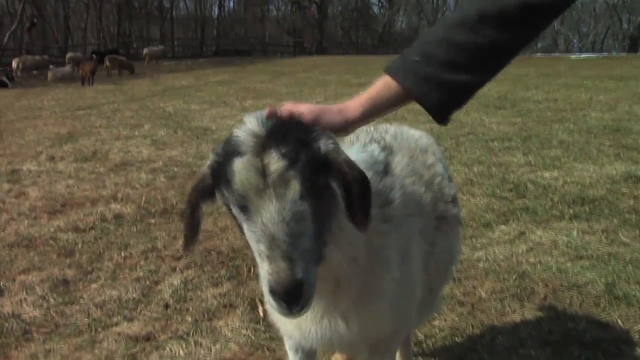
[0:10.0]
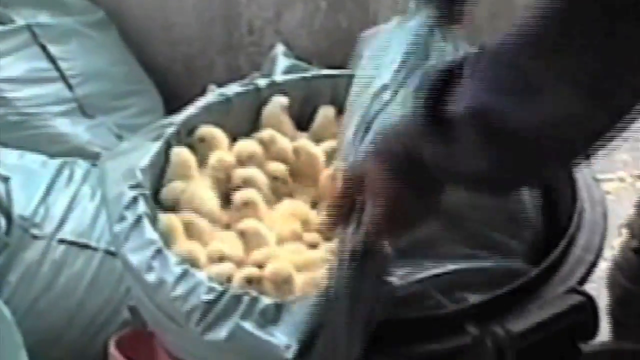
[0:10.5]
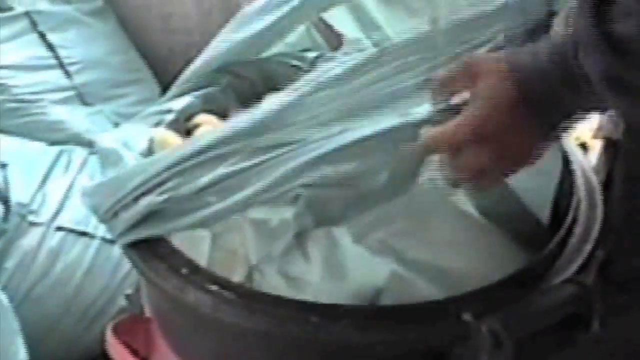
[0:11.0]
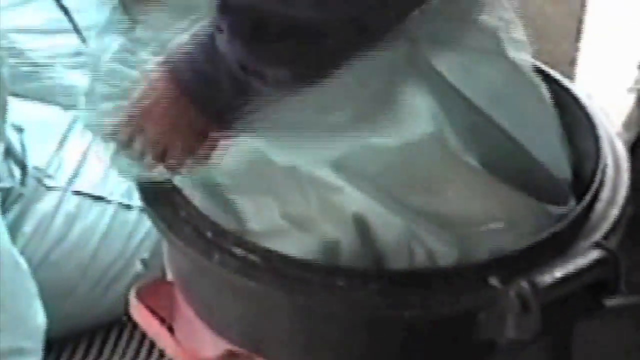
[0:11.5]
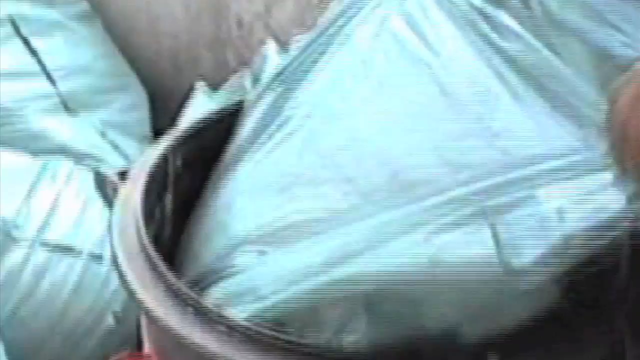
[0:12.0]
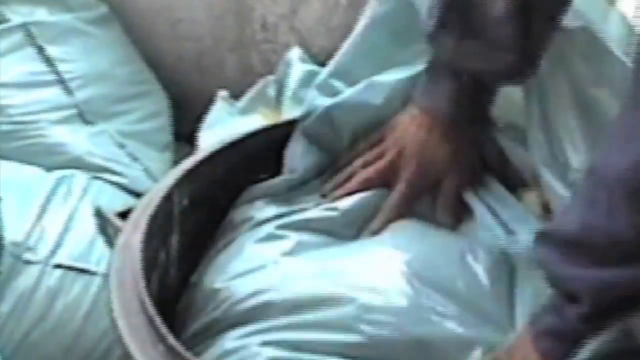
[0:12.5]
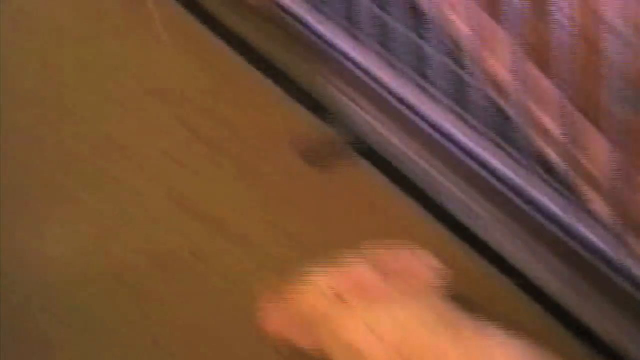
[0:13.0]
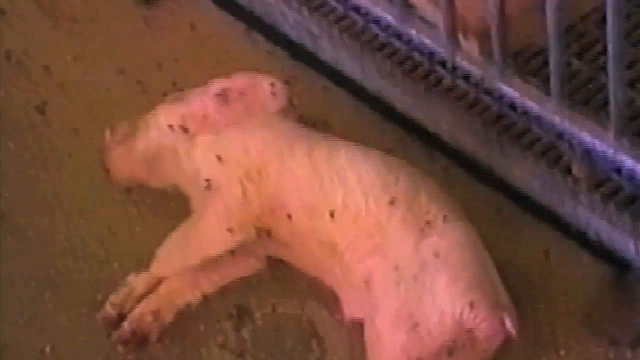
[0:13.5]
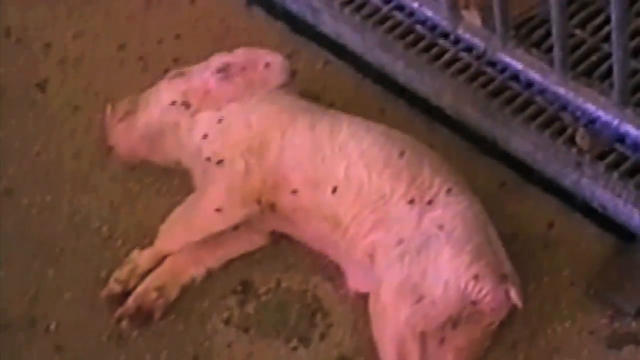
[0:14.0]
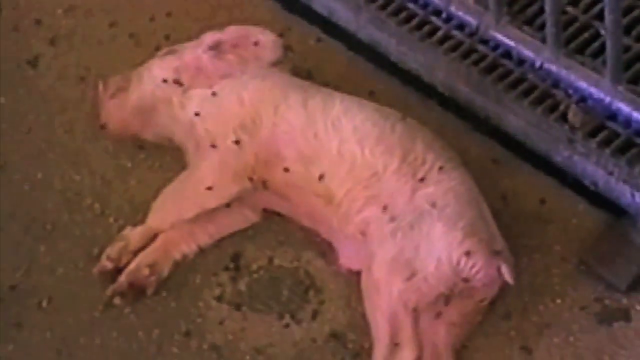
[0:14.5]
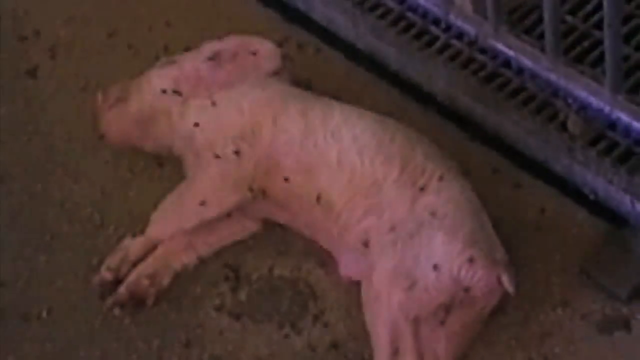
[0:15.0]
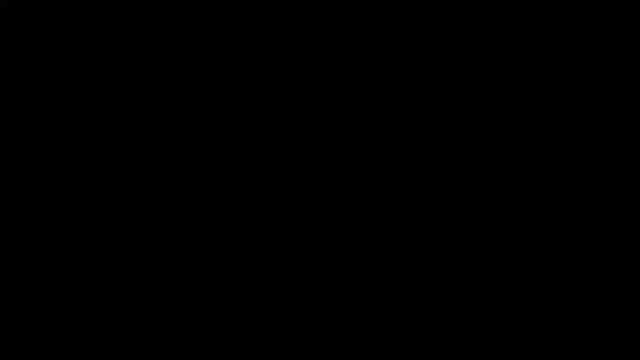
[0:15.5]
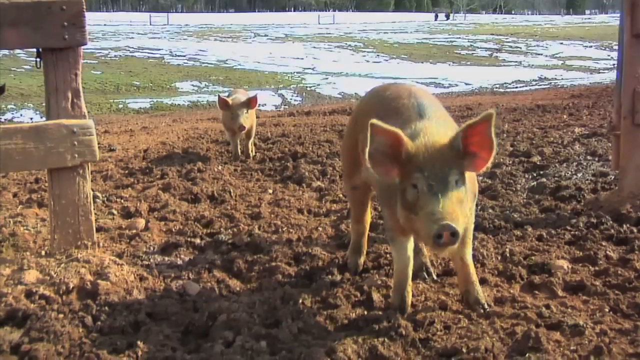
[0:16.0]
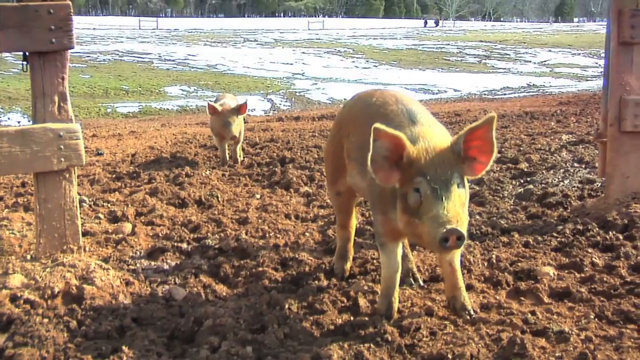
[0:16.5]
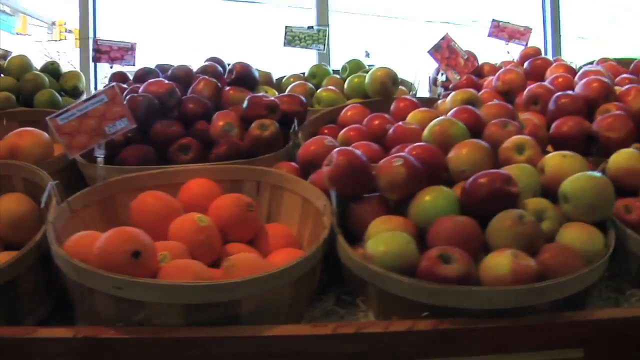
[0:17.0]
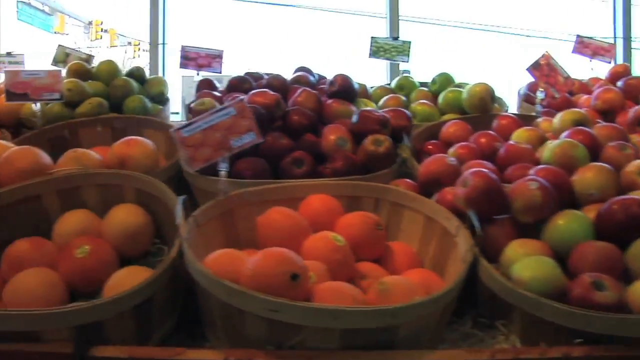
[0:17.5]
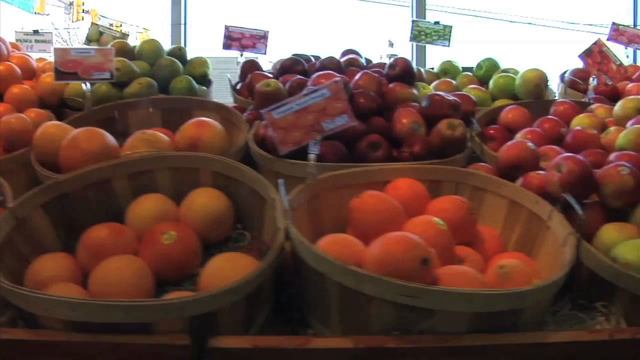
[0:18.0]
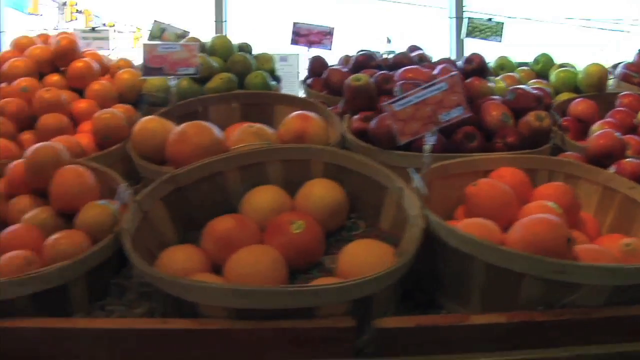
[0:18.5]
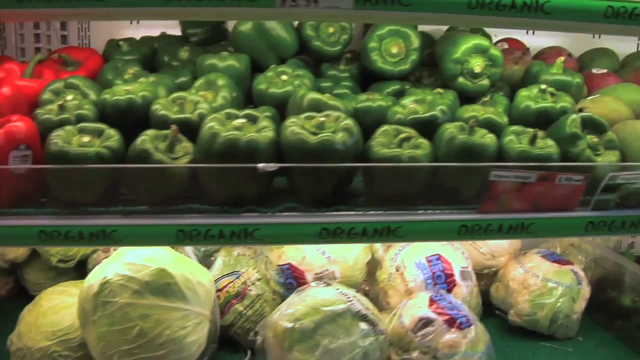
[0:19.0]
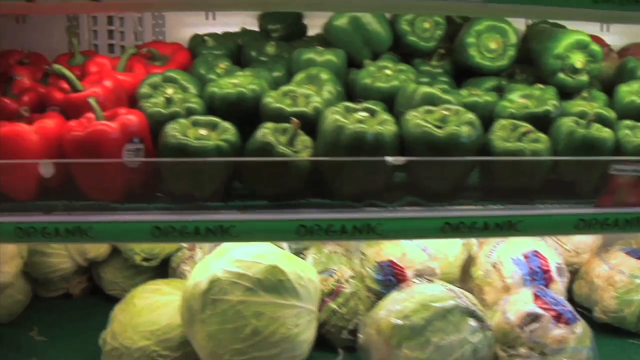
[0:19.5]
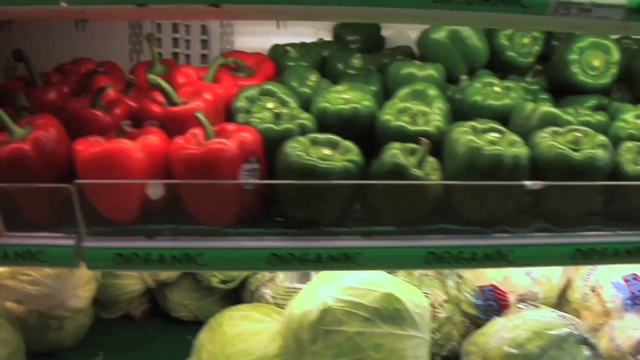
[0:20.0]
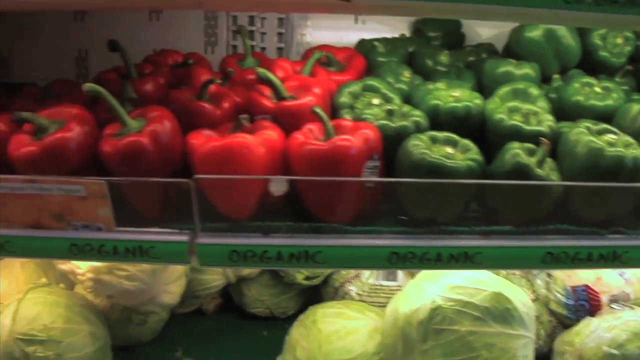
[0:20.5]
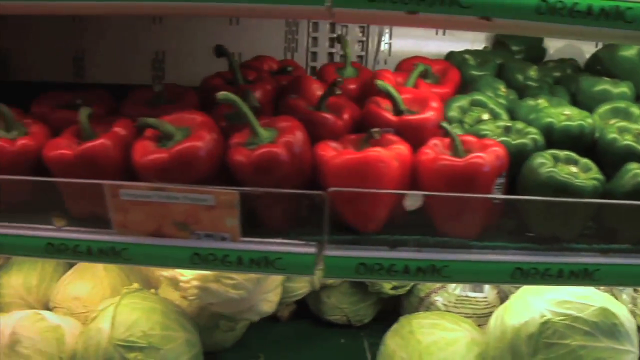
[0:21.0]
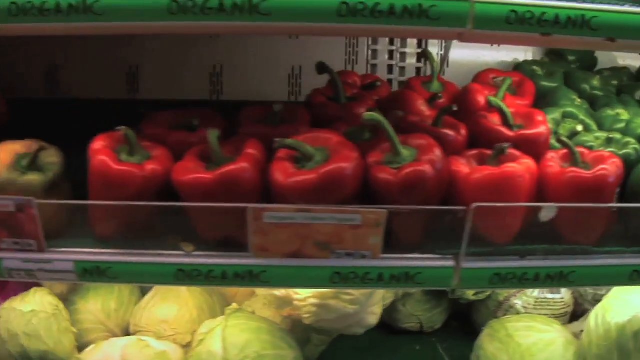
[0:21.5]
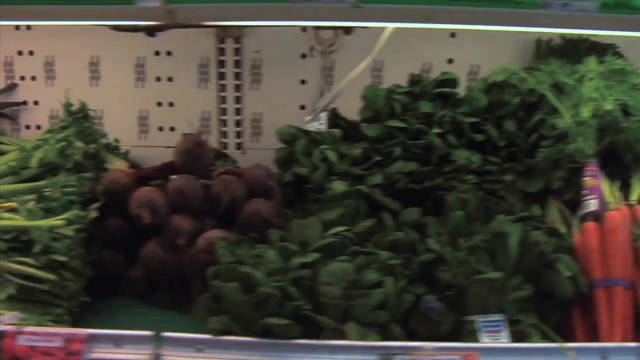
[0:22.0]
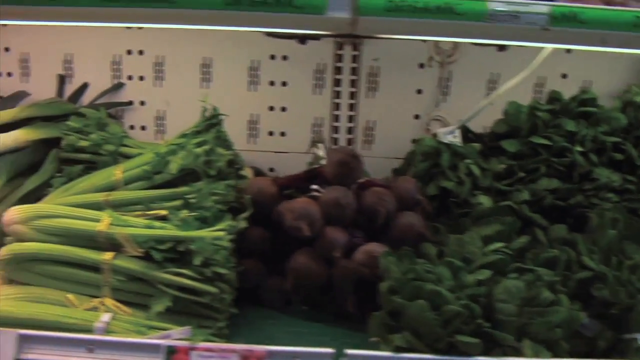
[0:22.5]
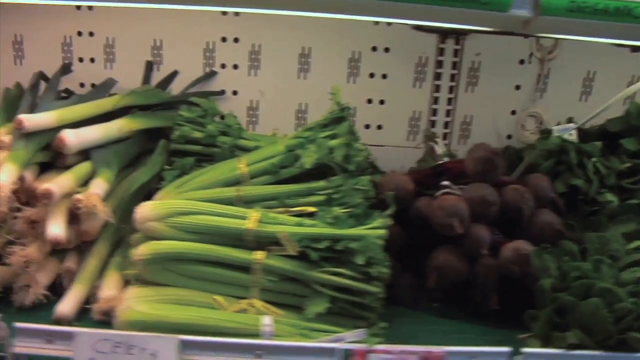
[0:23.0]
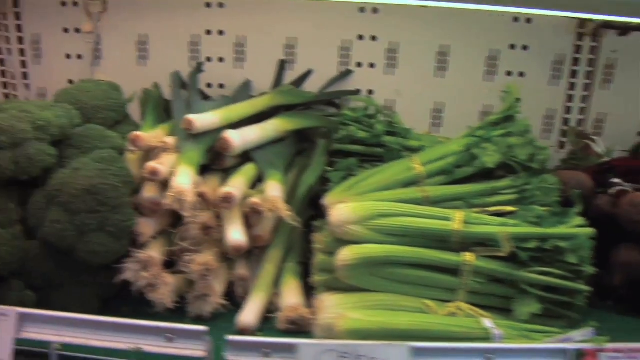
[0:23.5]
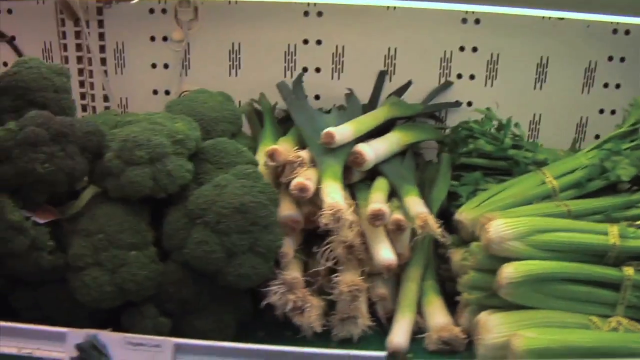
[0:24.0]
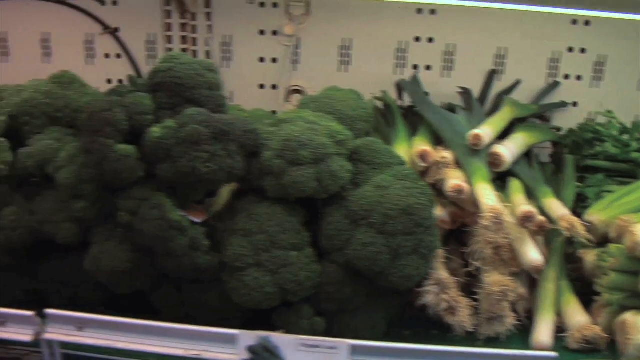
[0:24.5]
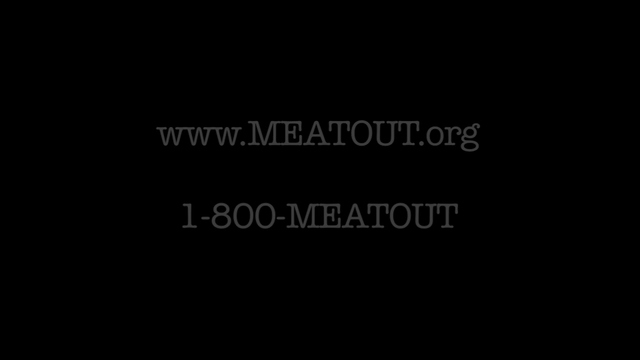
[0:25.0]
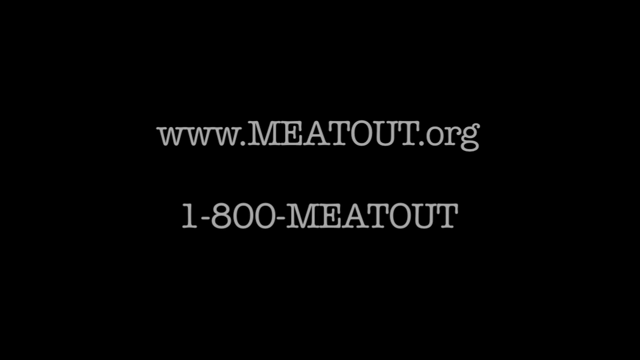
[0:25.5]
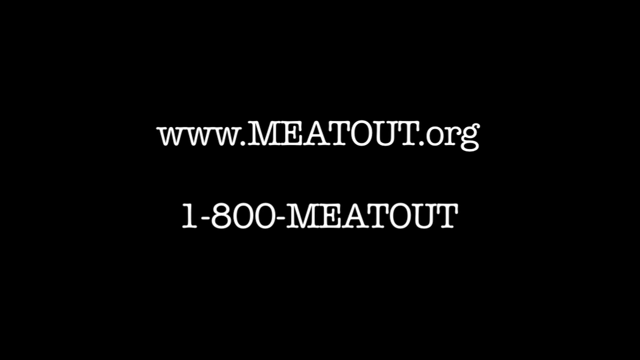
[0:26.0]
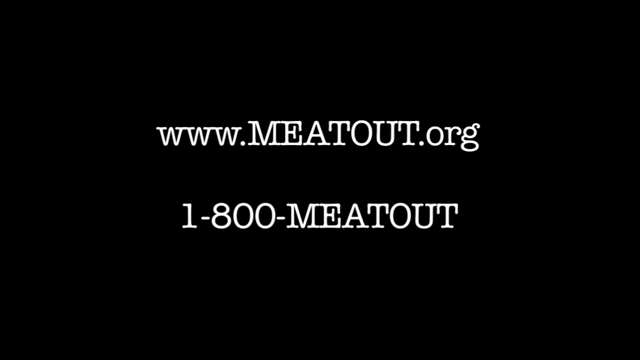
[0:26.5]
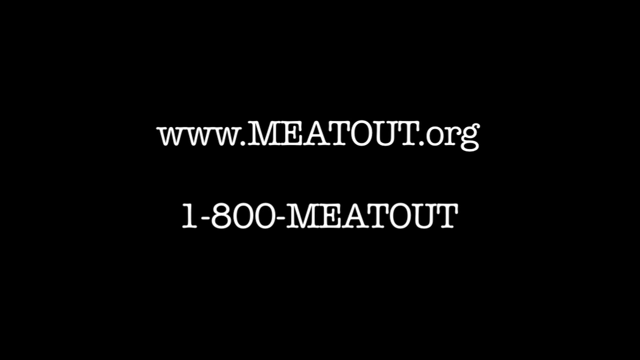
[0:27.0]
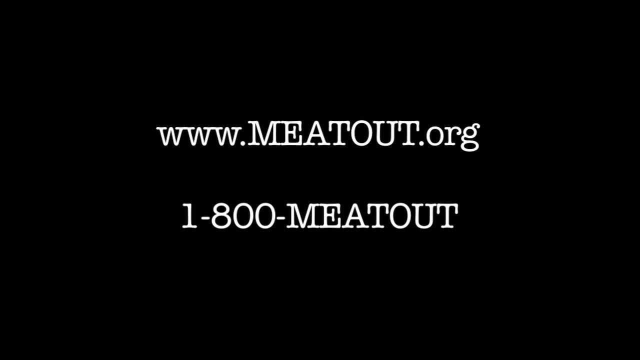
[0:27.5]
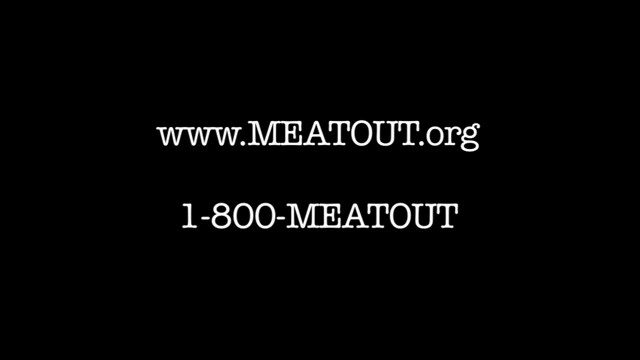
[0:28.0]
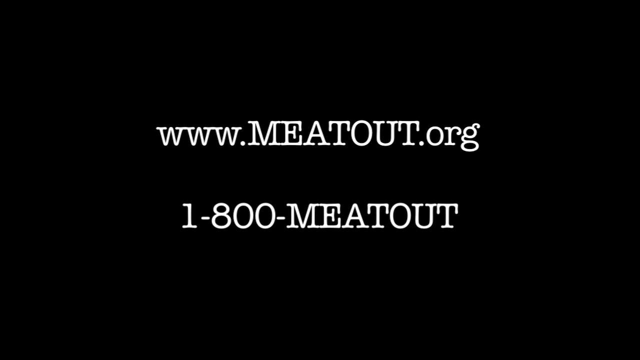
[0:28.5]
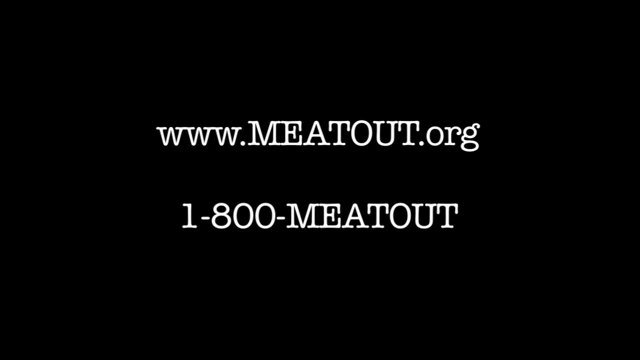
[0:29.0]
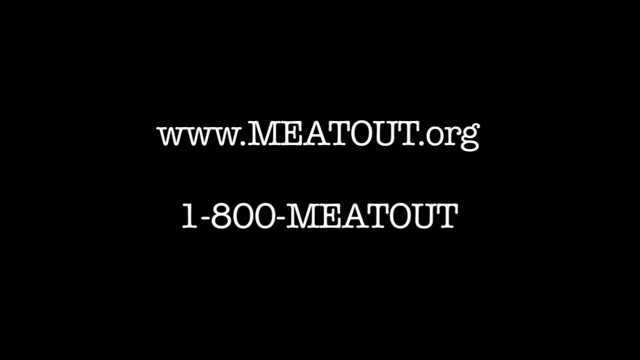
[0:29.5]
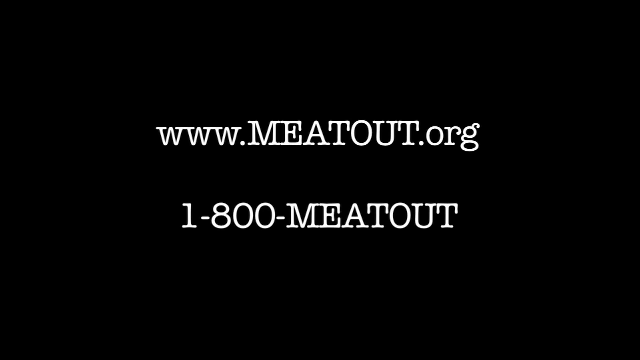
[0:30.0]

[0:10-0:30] A large gray pail with a sheet or tarp inside is filled with what appear to be baby ducks, and someone is smothering them; the person wrapping the ducklings in the tarp has long sleeves. Next, a dead pig covered in flies lies on its side in front of a grate. Then live pigs stand in mud, one large pig with a smaller pig behind it, with snow on the ground in the distance behind them. A market is filled with baskets full of apples and oranges, followed by a grocery store showing green and red bell peppers, heads of lettuce, carrots, celery, broccoli and spring onions. The video transitions to a black screen with white letters in the center reading "www.meatout.org" along with the phone number "1-800-MEAT-OUT".